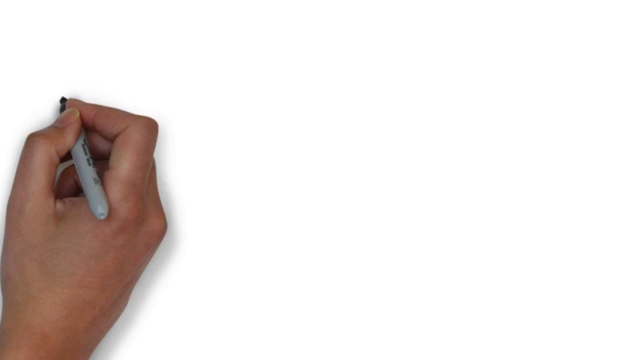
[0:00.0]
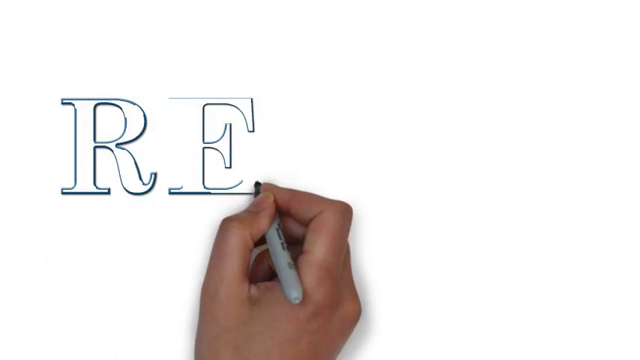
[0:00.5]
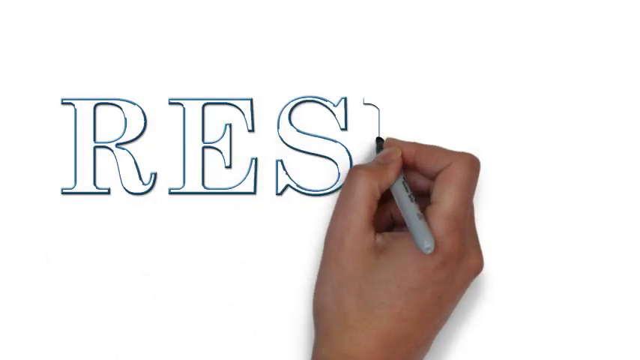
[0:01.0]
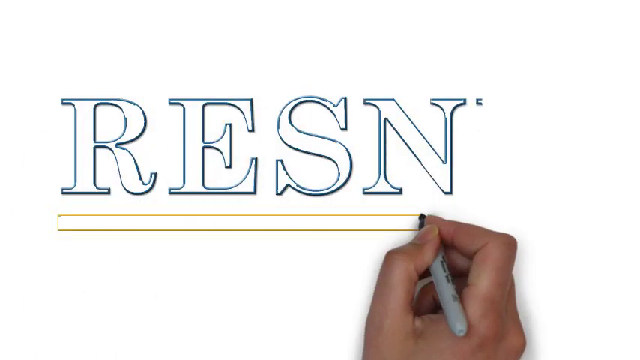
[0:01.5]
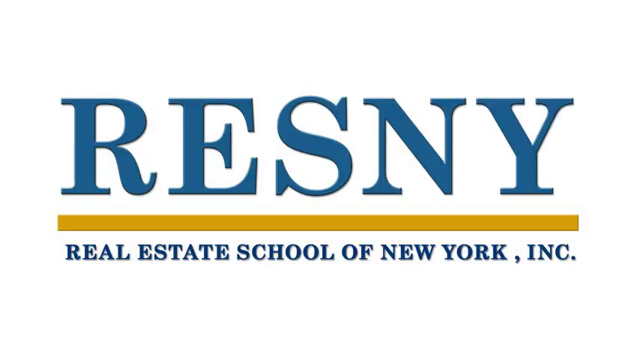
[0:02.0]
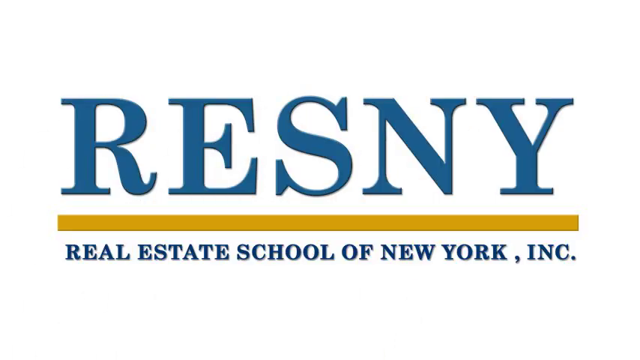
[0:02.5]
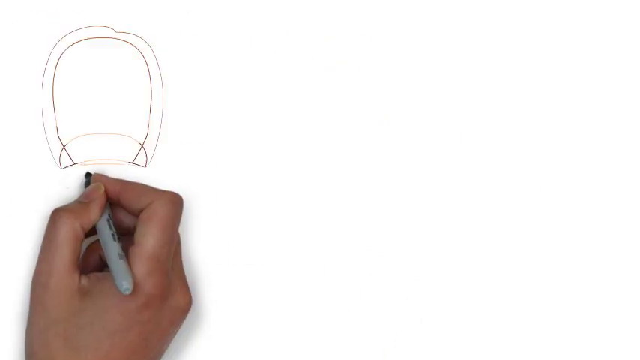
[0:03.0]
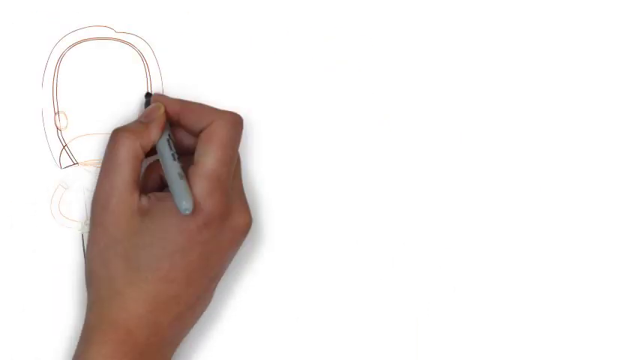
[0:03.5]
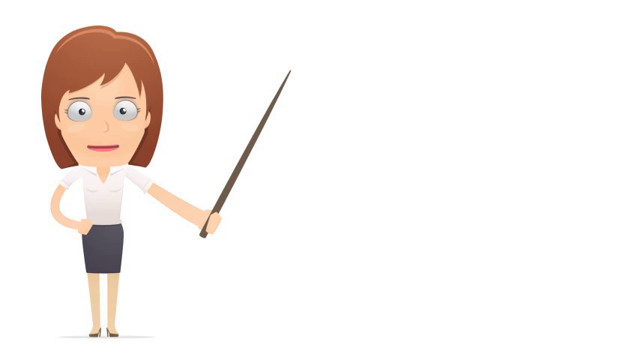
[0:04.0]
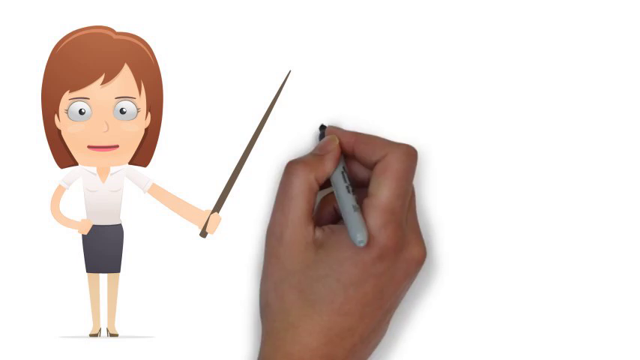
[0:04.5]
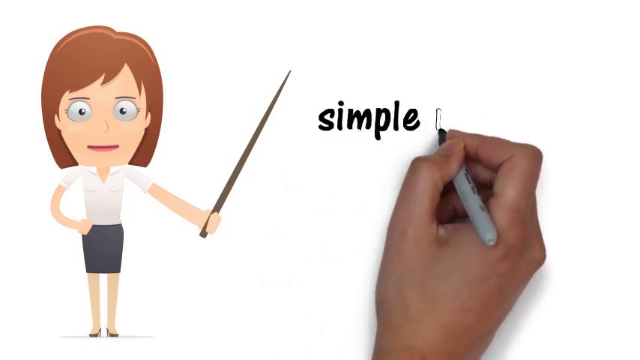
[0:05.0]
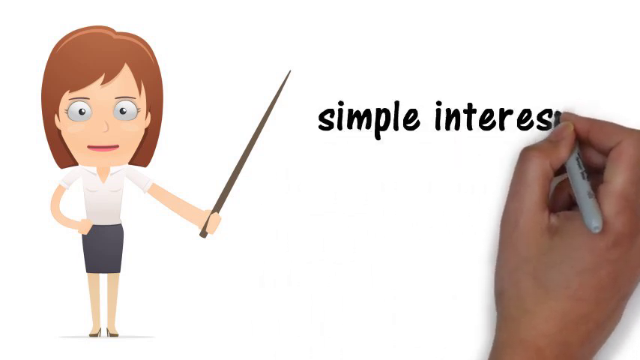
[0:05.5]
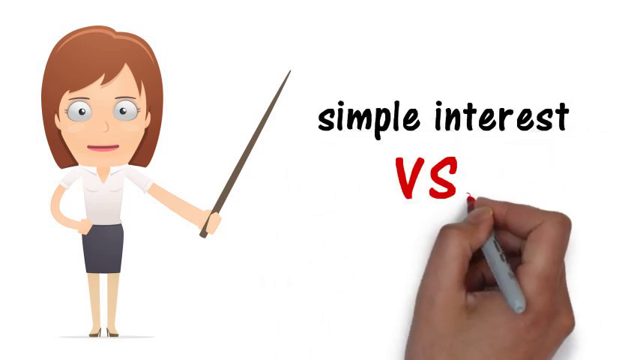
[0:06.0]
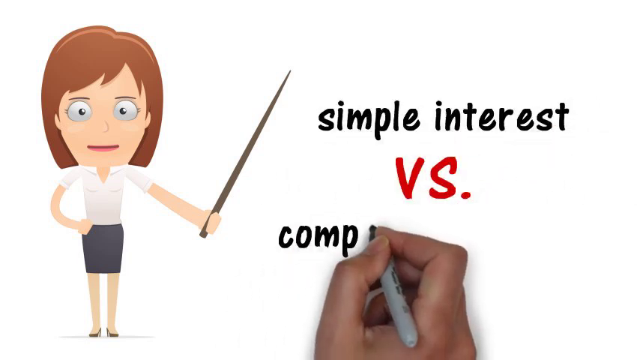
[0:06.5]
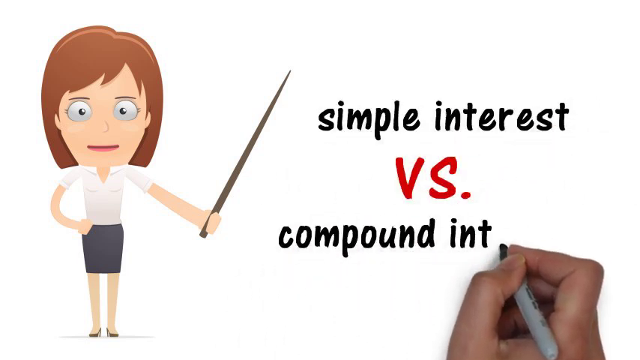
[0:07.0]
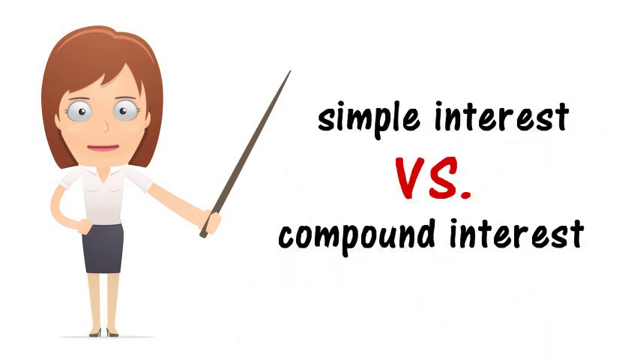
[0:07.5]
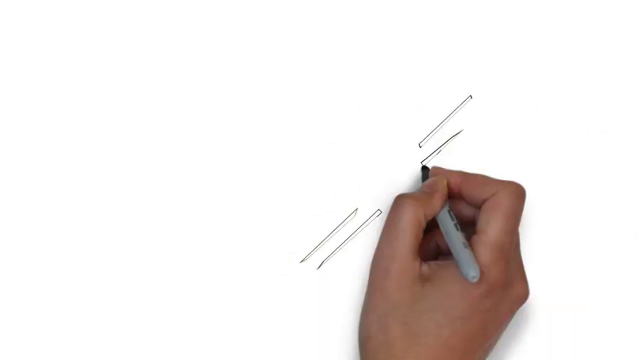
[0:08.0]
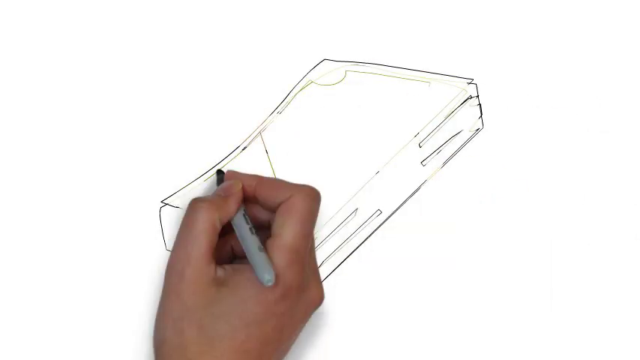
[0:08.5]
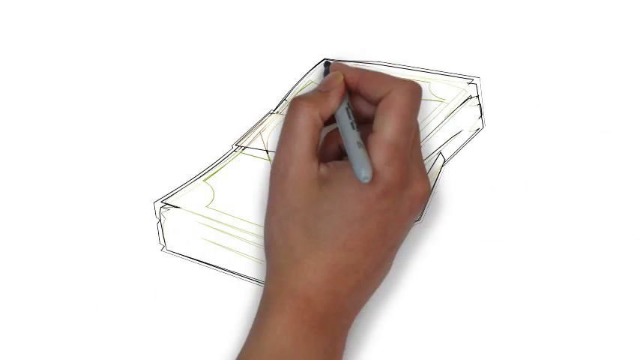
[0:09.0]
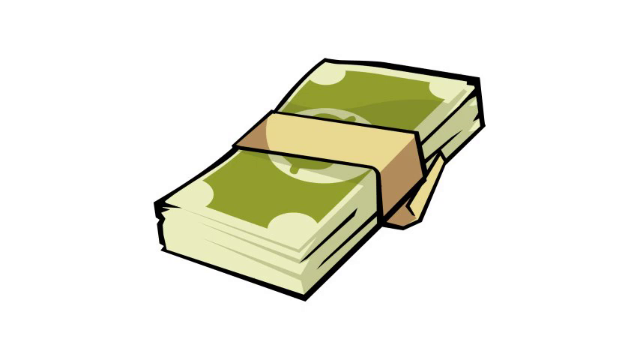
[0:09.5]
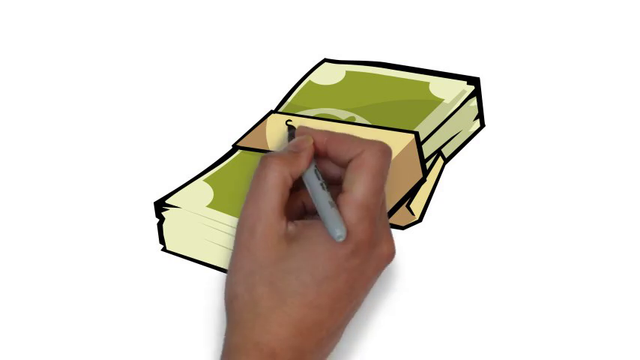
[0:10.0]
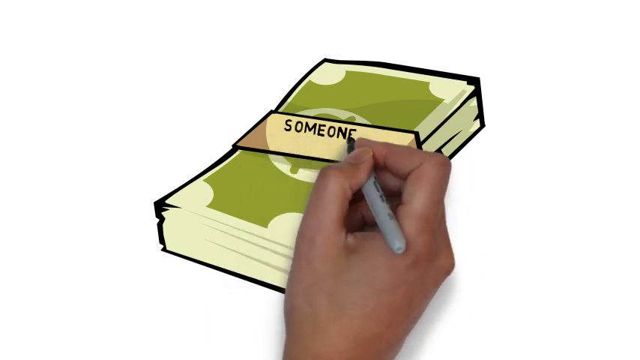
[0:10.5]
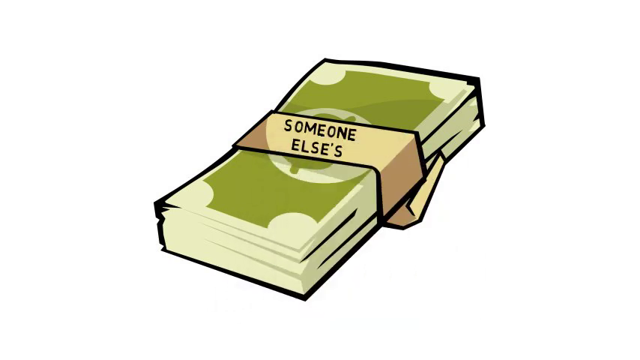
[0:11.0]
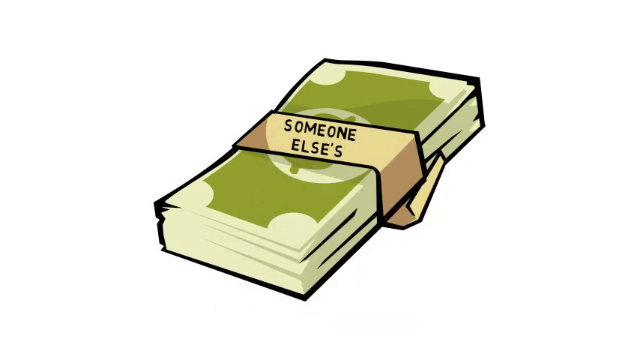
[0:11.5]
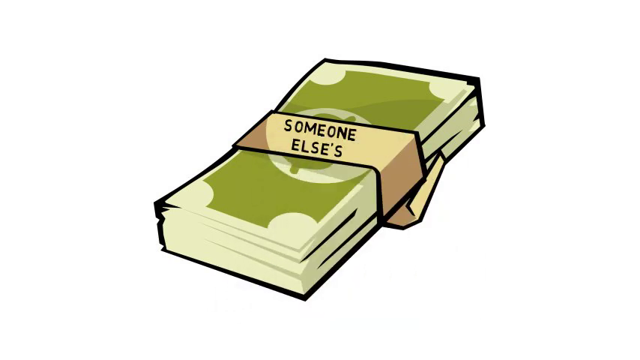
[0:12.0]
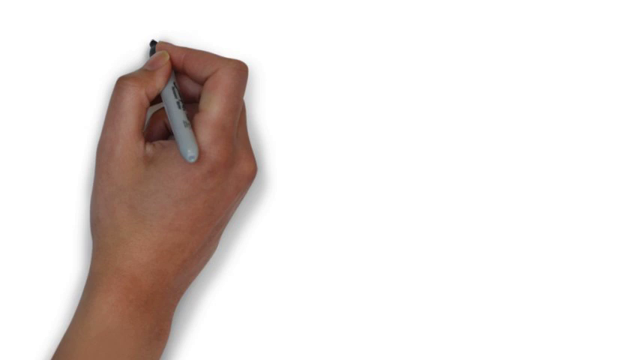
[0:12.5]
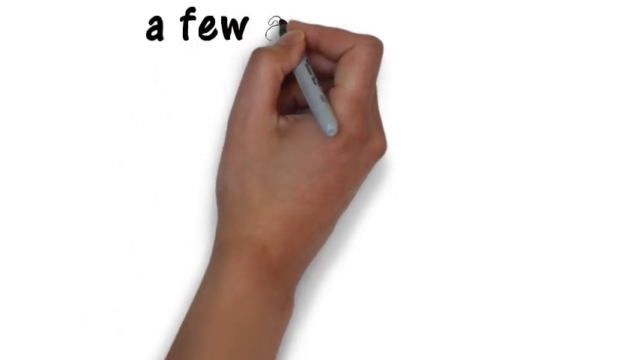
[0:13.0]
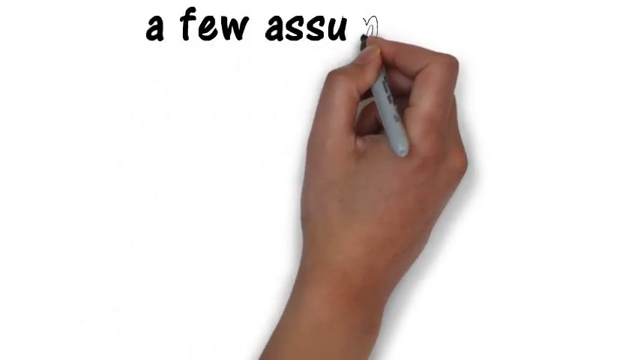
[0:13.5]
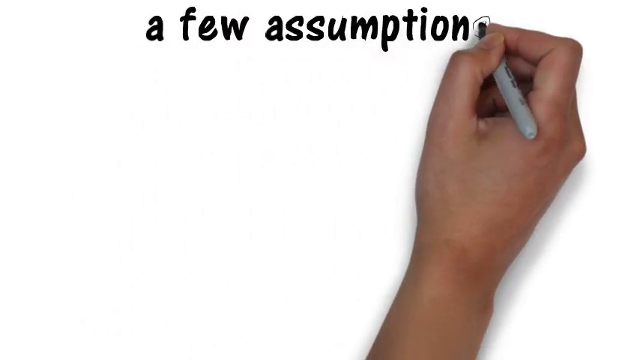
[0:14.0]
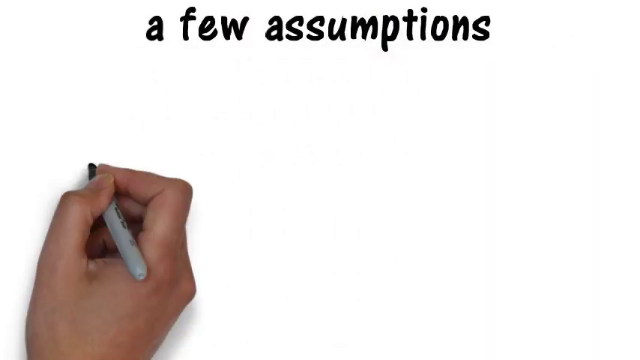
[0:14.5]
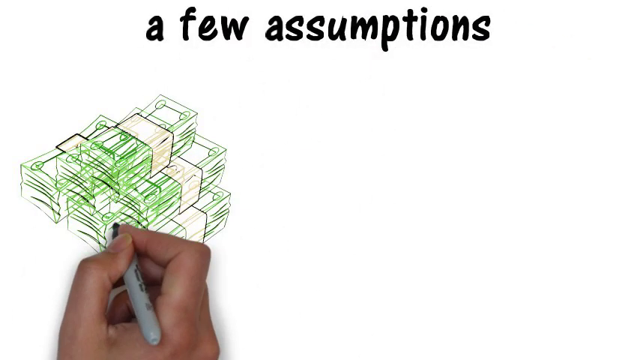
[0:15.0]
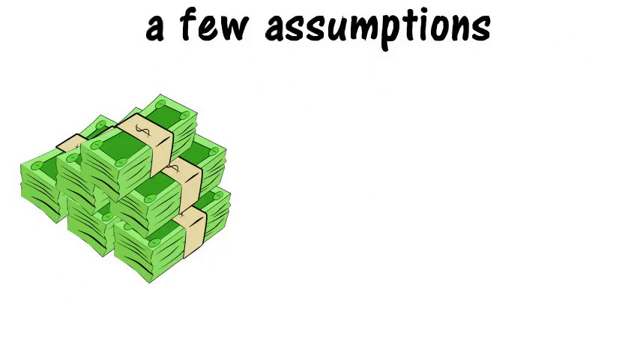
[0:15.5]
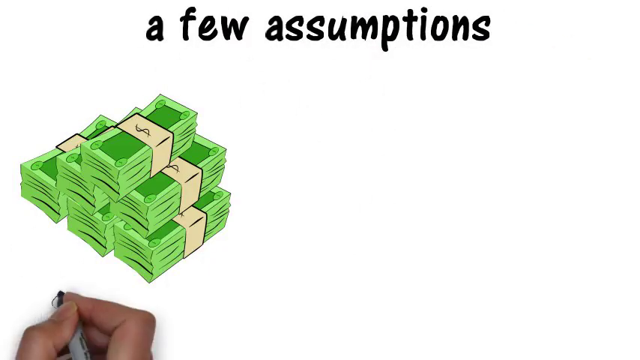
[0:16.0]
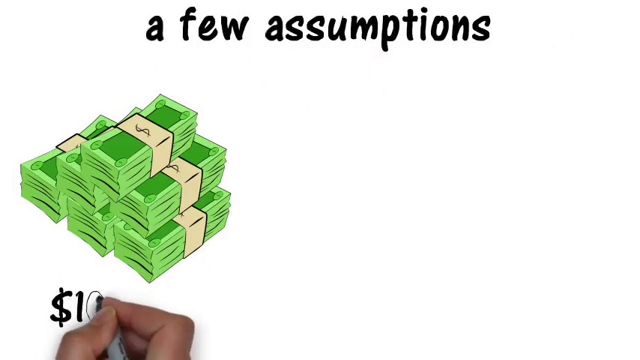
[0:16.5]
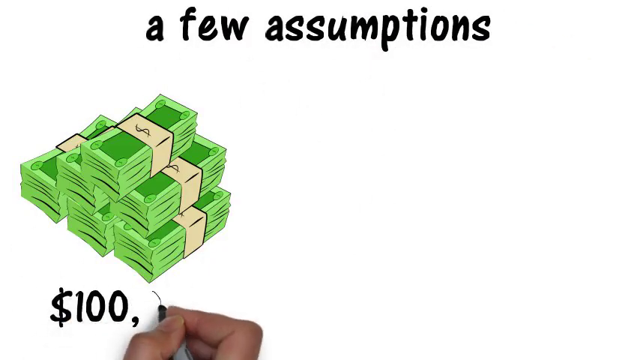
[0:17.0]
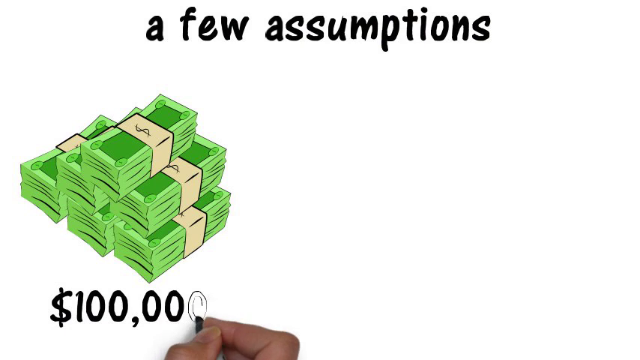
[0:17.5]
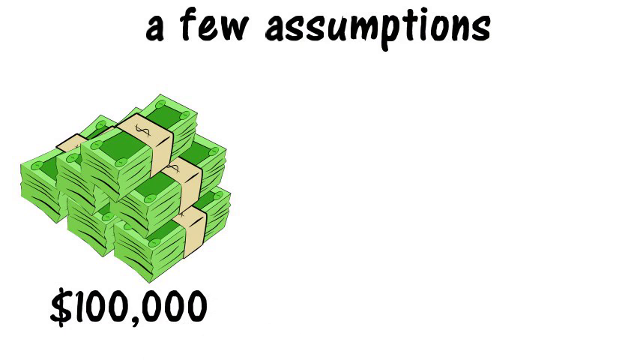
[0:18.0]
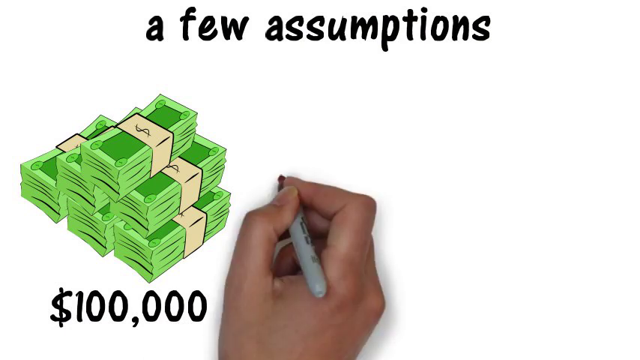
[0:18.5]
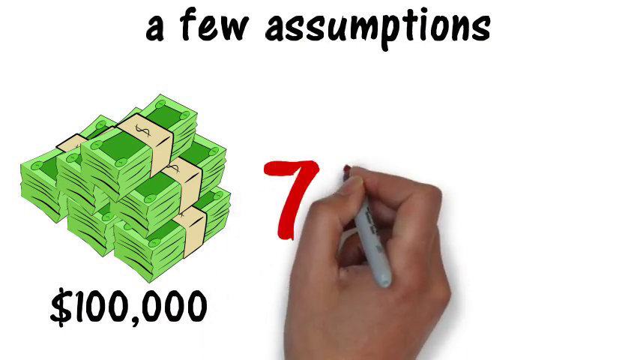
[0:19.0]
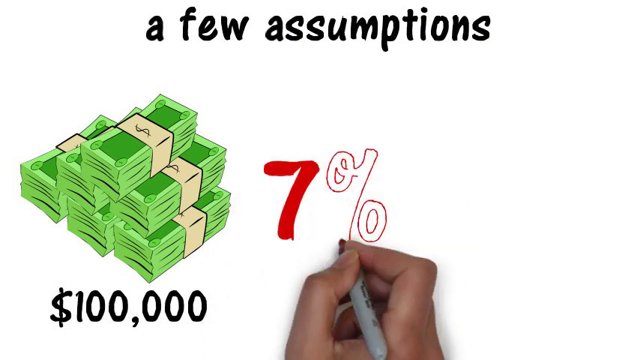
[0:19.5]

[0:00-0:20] The animation is in the style where a hand holding a sharpie or pencil draws everything on screen in real time. It begins by writing what appears to be the name of an organization: "Resny Real Estate School of New York Inc." The hand then draws a caricature of a woman with a cane pointing to text on the right of the screen that reads "Simple Interest vs. Compound Interest". Next, the hand draws in the center of the screen a stack of dollars tied with a piece of paper, covering almost the entire screen, and writes "Someone Else's" on the paper wrapped around the bills. The hand then writes "A Few Assumptions" and draws the stack of money with "$100,000" below it.